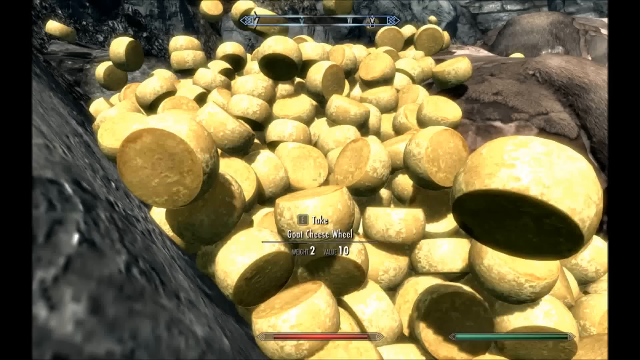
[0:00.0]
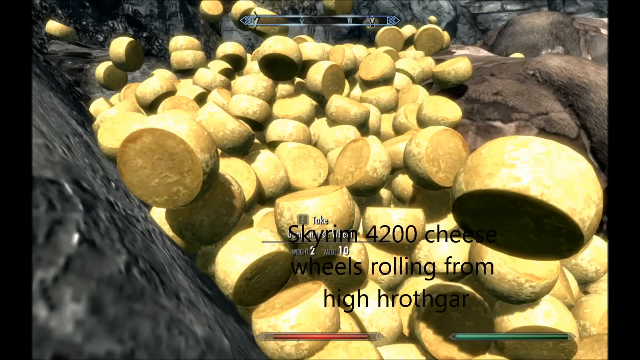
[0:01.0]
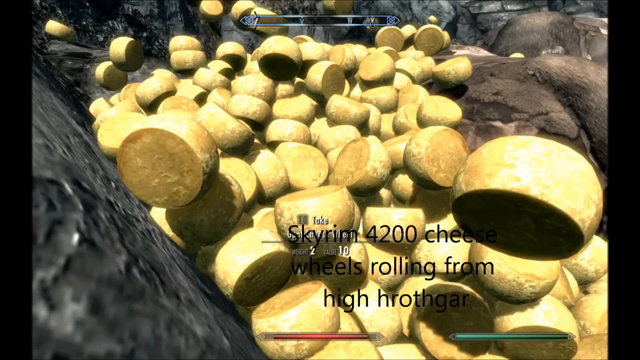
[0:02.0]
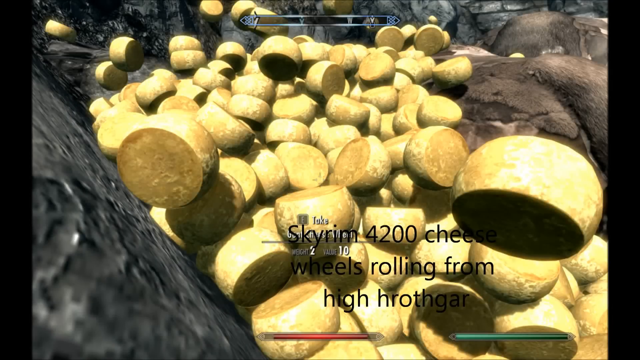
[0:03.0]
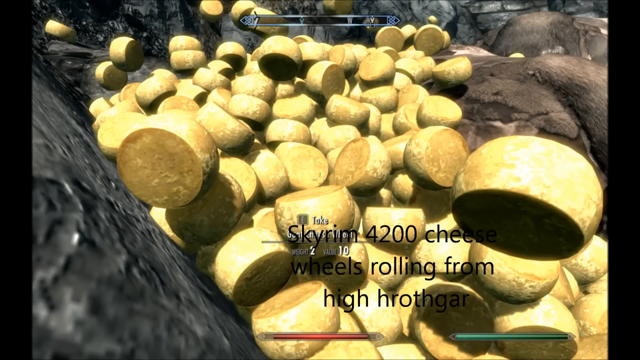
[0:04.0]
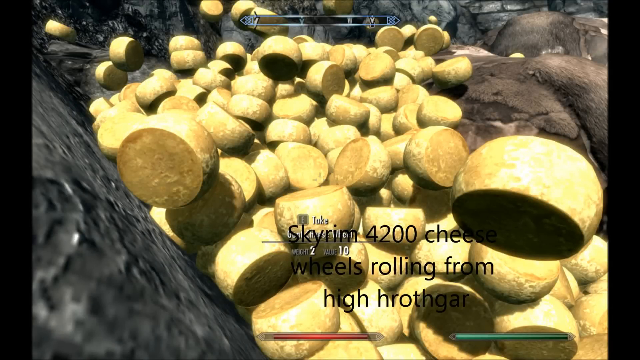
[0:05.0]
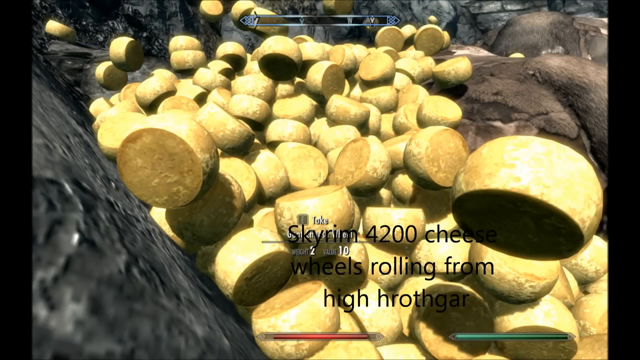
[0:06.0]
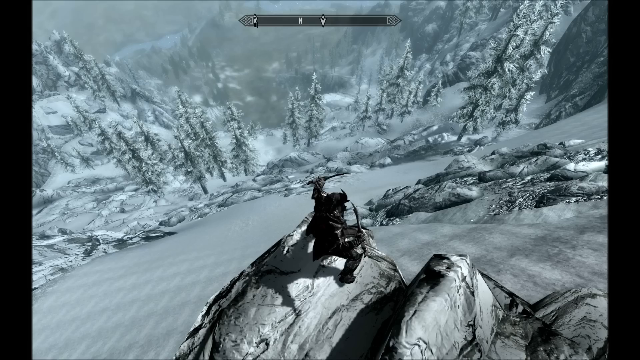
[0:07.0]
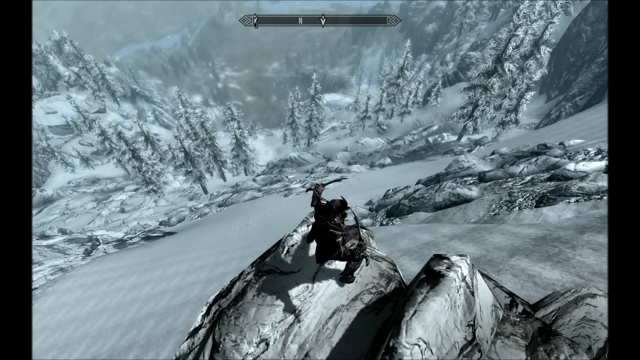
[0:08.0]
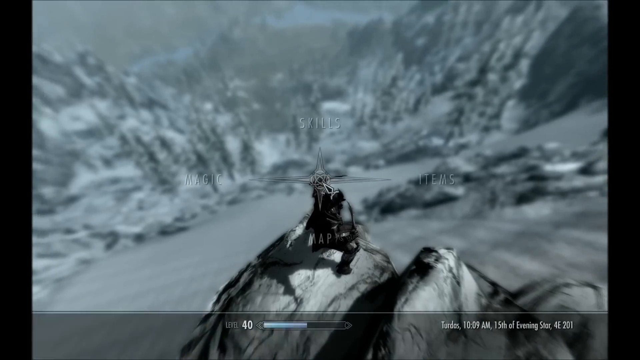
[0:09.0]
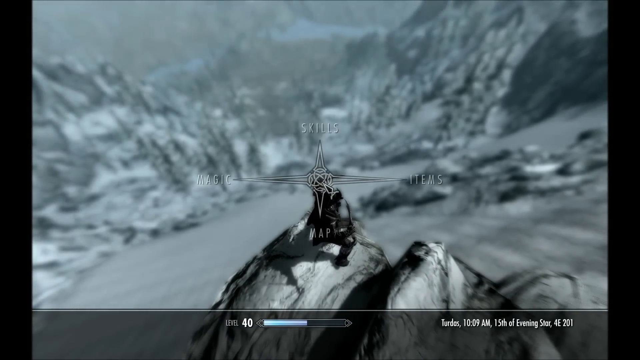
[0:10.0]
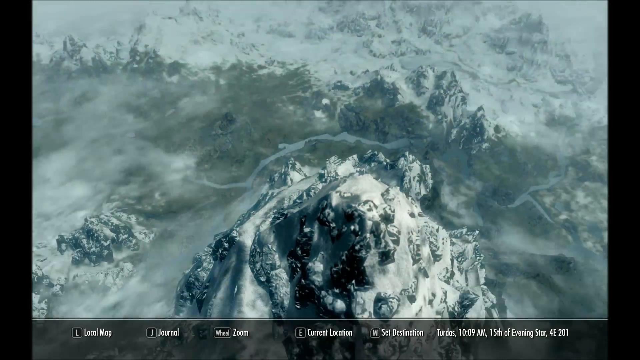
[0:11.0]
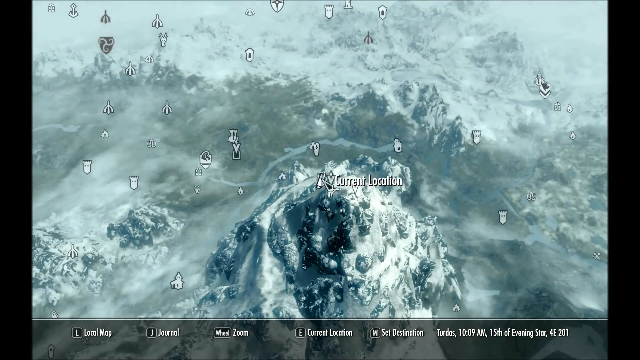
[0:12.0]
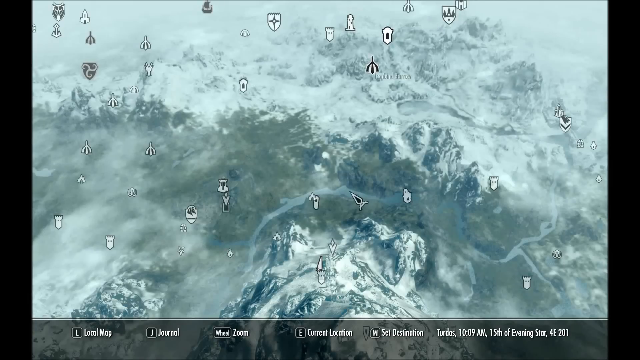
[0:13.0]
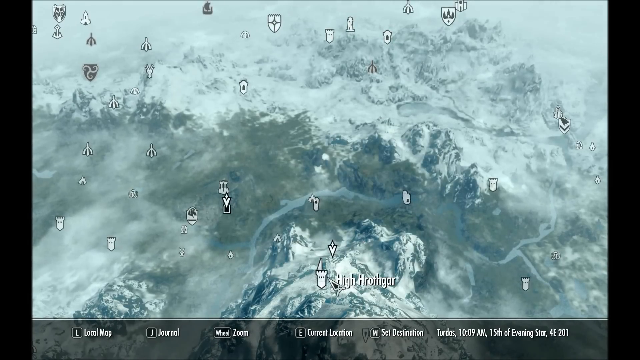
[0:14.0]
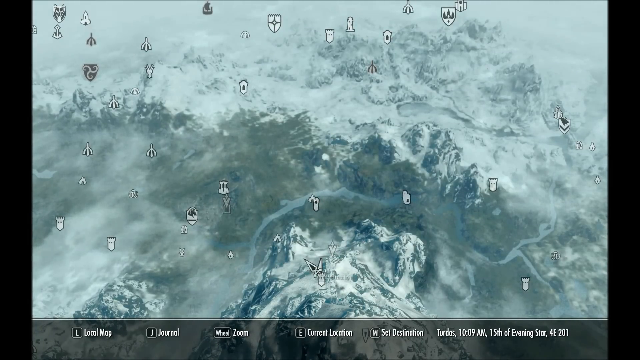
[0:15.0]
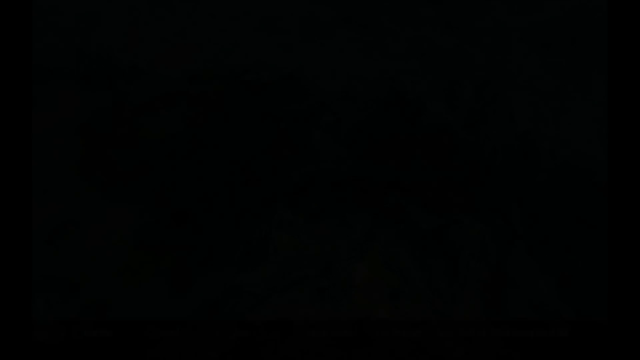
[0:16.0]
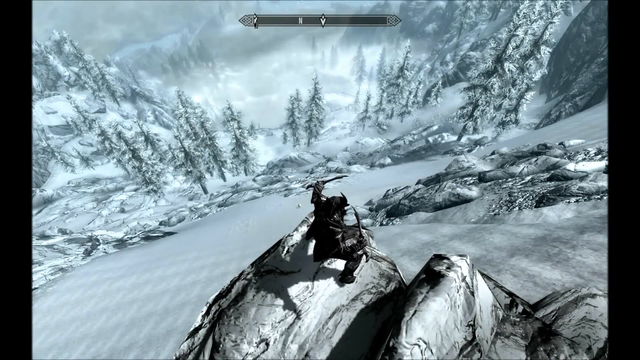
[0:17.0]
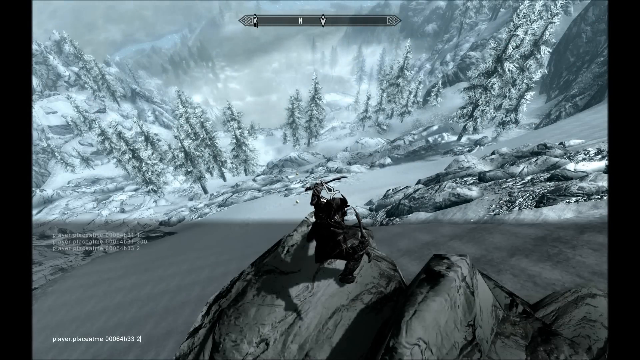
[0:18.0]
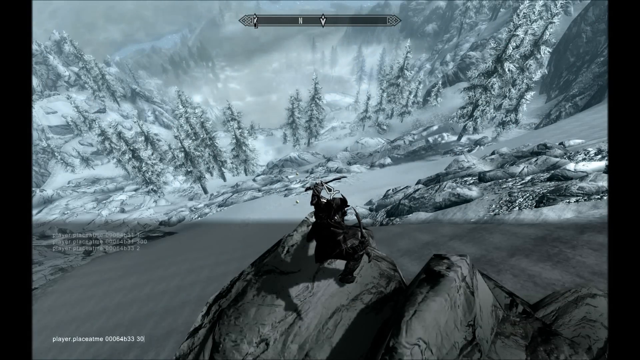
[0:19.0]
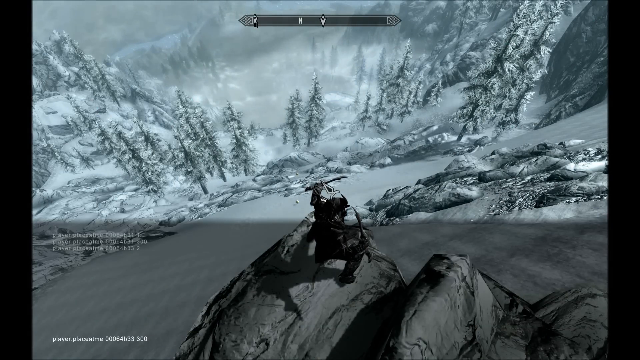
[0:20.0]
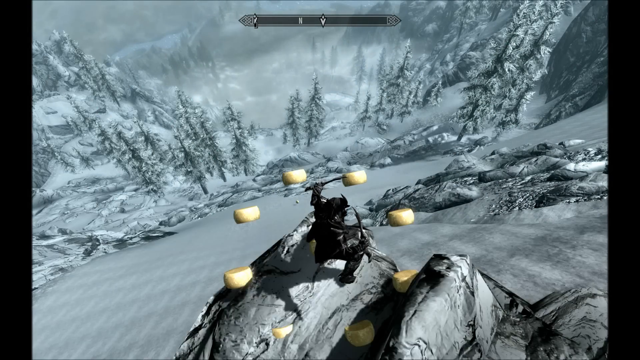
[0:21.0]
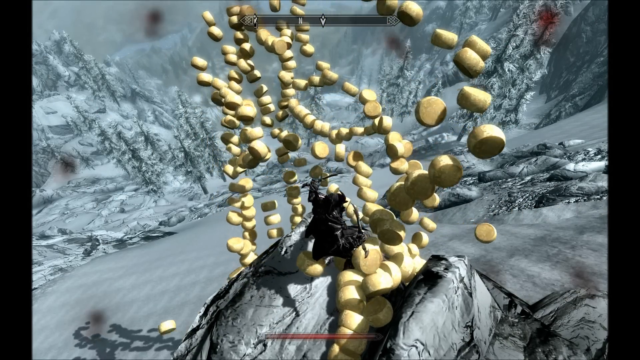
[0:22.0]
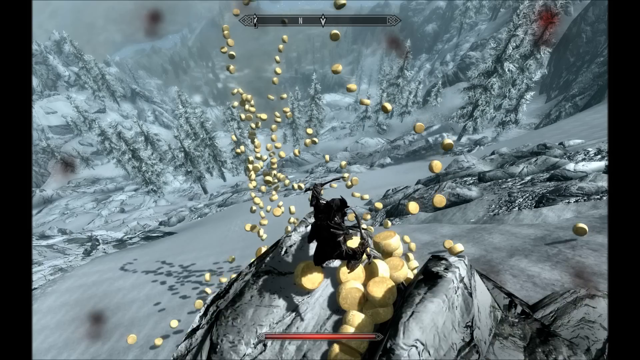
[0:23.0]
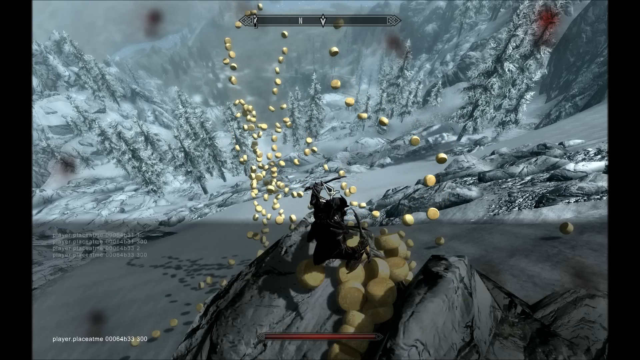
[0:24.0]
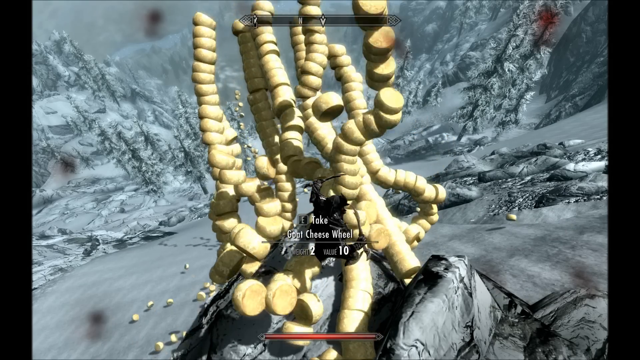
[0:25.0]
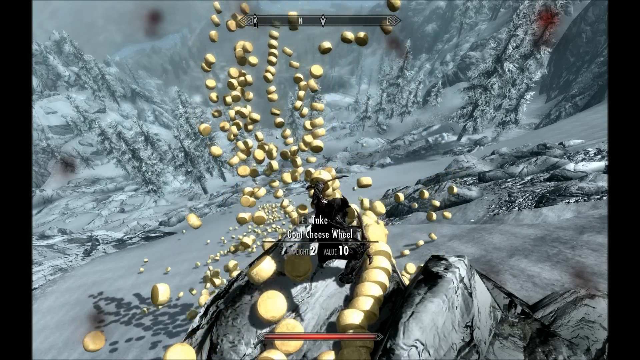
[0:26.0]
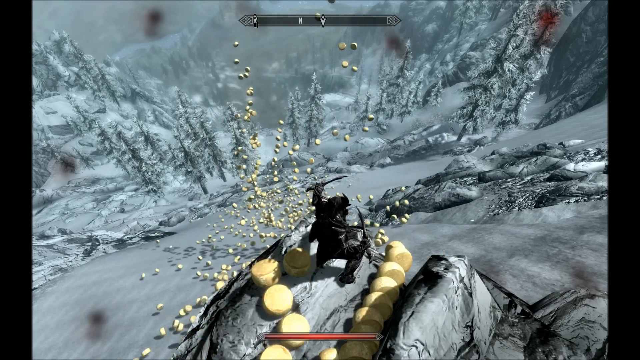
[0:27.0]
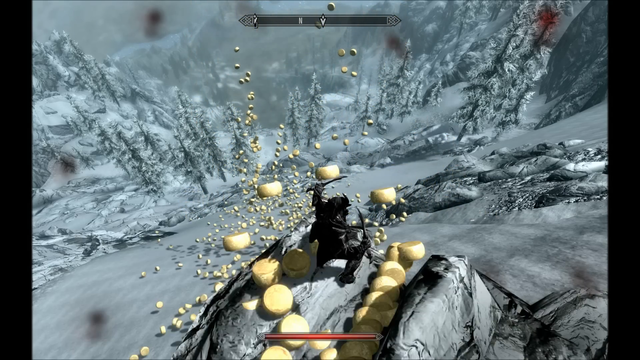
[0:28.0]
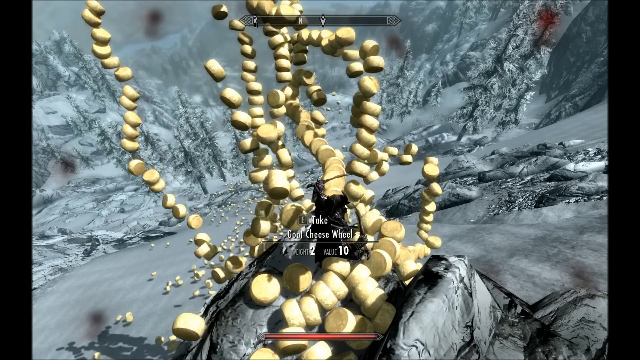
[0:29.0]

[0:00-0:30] The video opens on a still picture of what looks like half of a wooden object; it kind of resembles a bowl but has a solid inside. Many of these items are in the center of the screen, coming in from the bottom right-hand side. The video then shows a video game that looks like a first-person game played in a third-person view. A character at the bottom center of the screen stands on a boulder on top of a mountain in what looks like a snowy environment. Looking up, trees are at the bottom of the mountain; they look like pine trees covered in snow, and the area looks rocky. The video then goes into a map-like view with different symbols throughout the area.